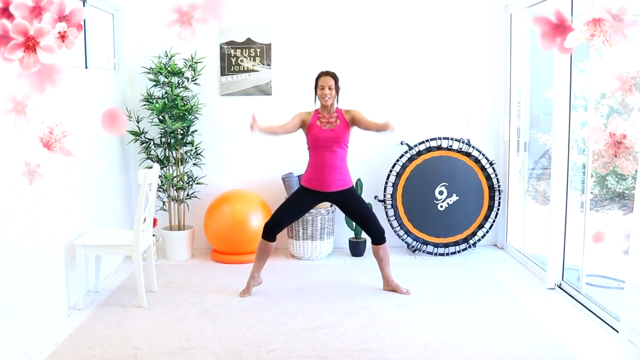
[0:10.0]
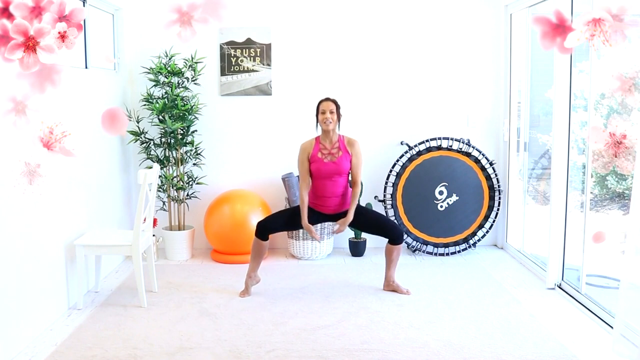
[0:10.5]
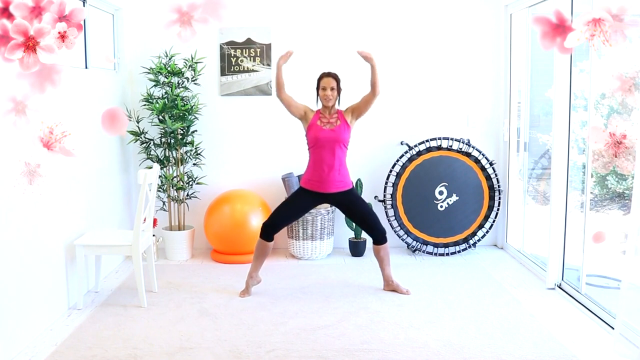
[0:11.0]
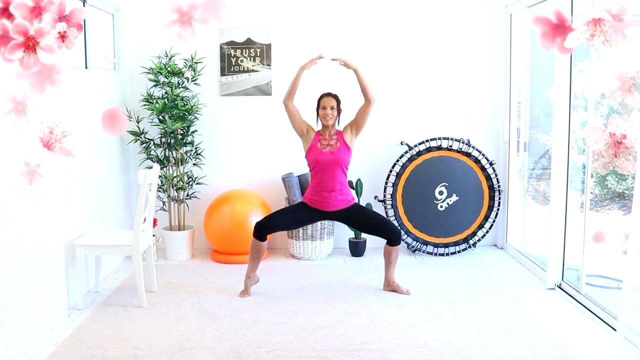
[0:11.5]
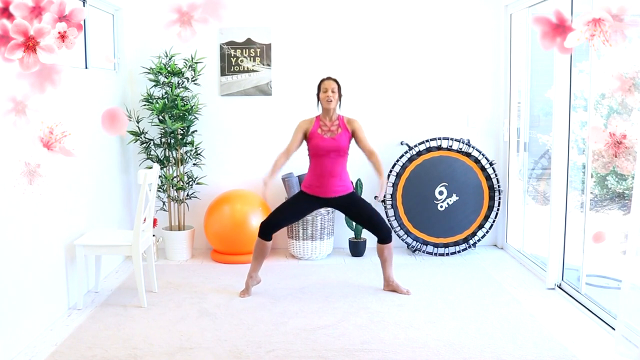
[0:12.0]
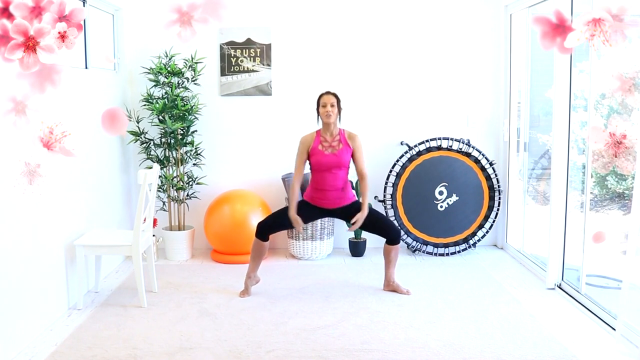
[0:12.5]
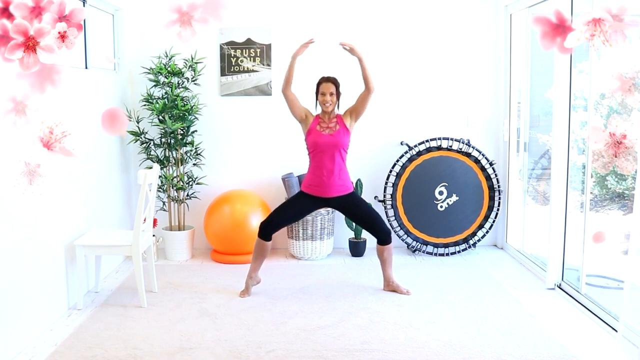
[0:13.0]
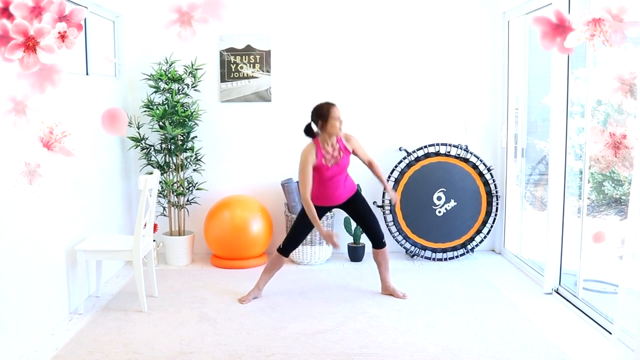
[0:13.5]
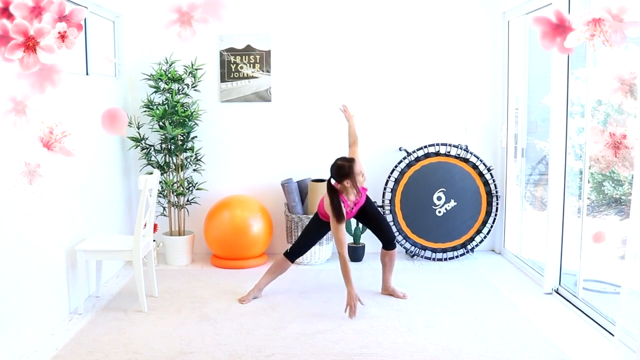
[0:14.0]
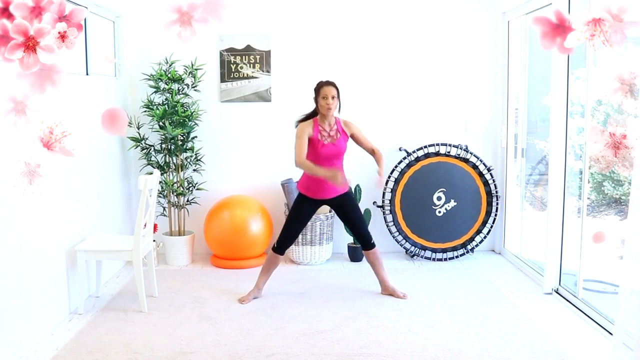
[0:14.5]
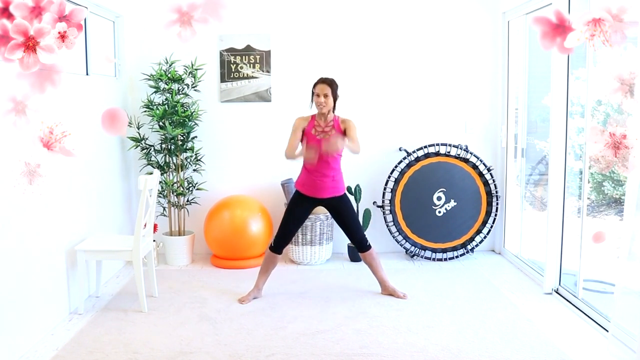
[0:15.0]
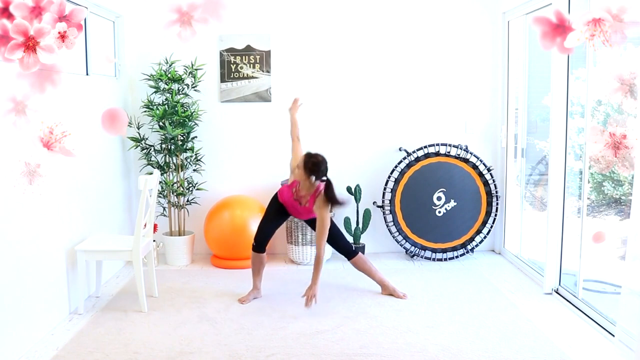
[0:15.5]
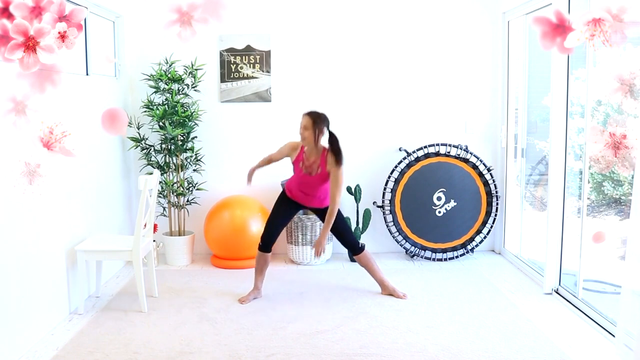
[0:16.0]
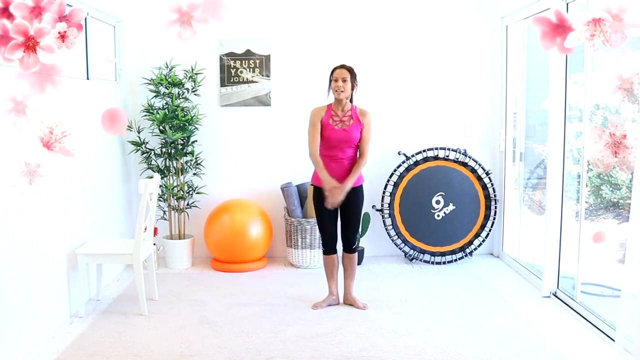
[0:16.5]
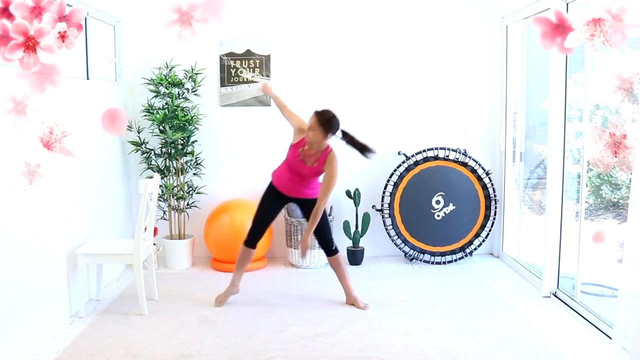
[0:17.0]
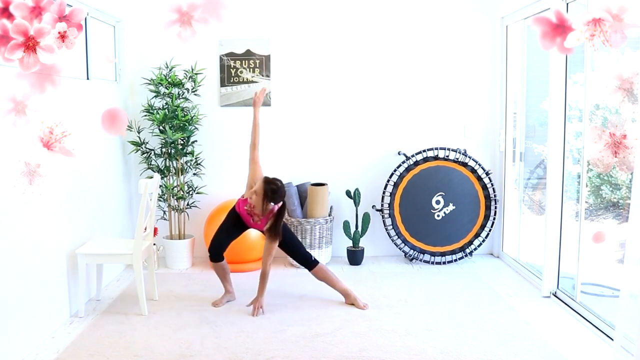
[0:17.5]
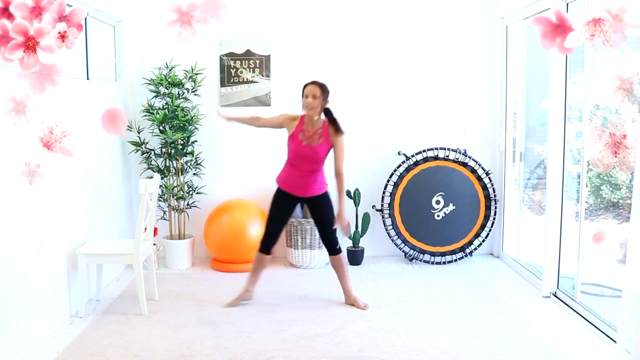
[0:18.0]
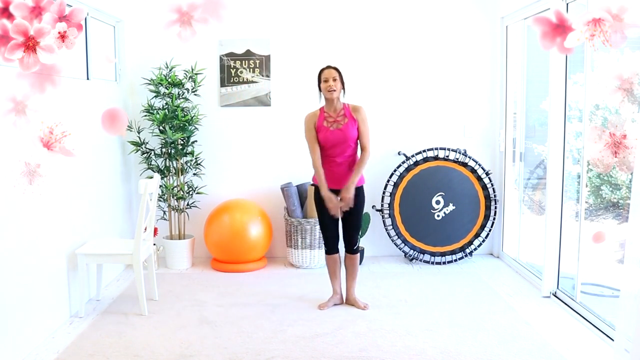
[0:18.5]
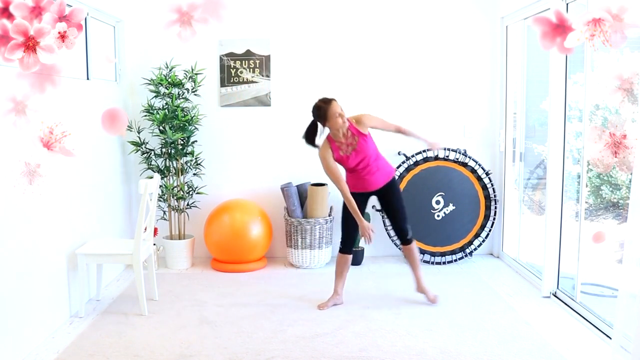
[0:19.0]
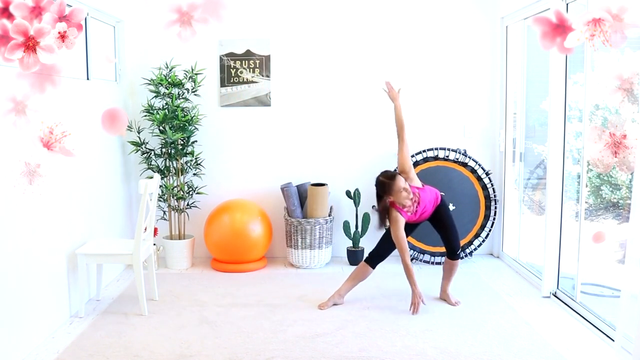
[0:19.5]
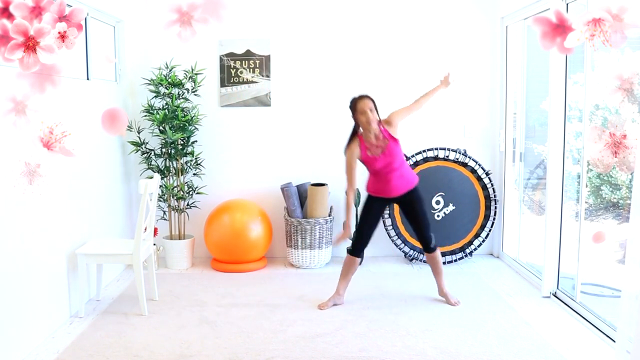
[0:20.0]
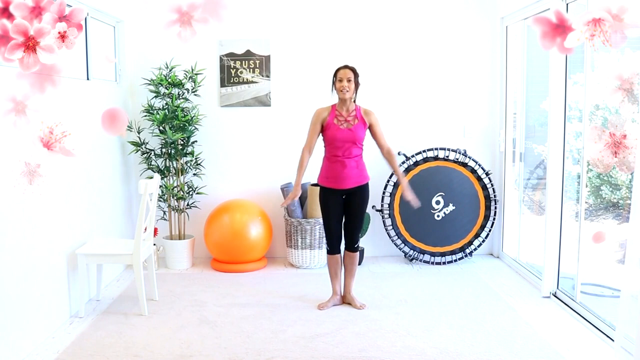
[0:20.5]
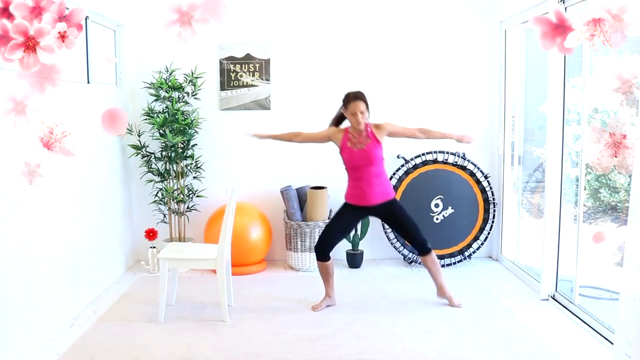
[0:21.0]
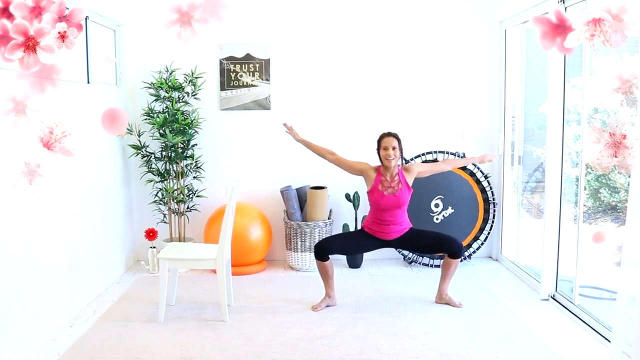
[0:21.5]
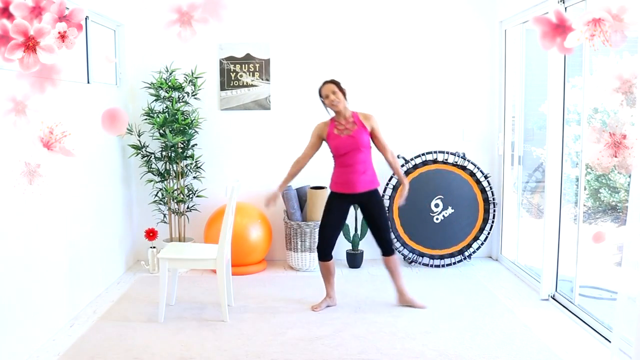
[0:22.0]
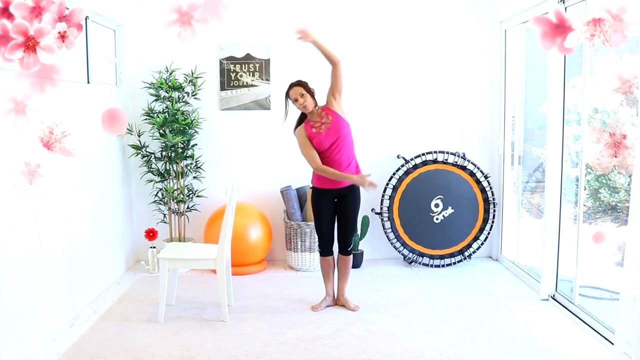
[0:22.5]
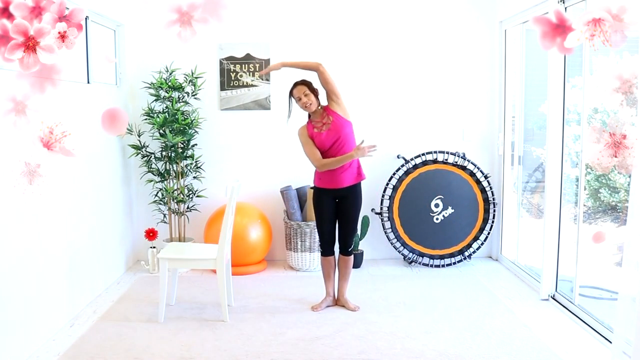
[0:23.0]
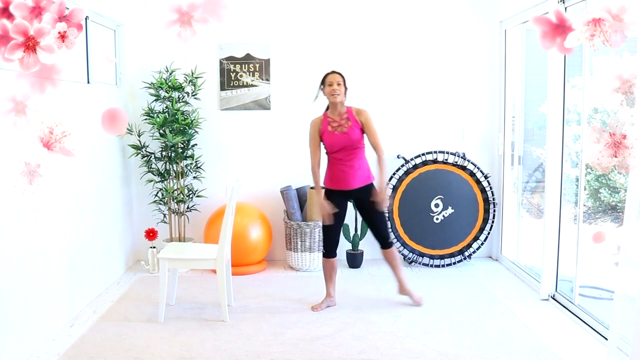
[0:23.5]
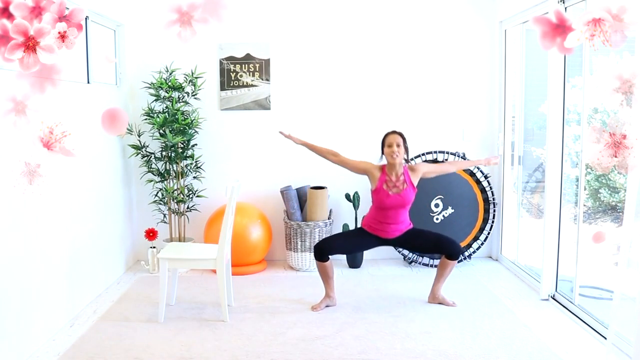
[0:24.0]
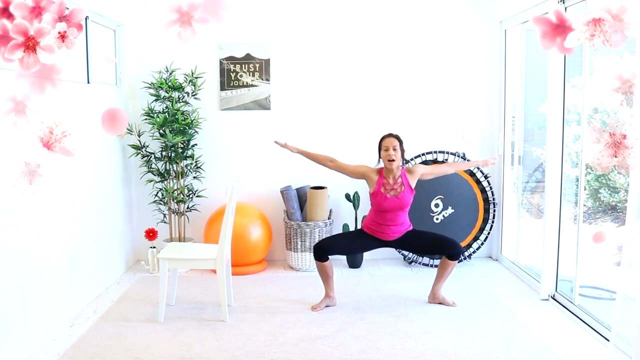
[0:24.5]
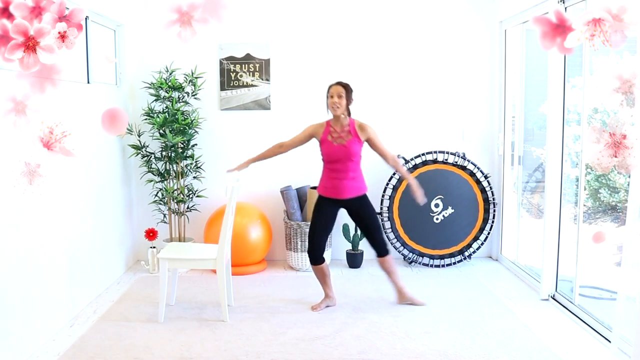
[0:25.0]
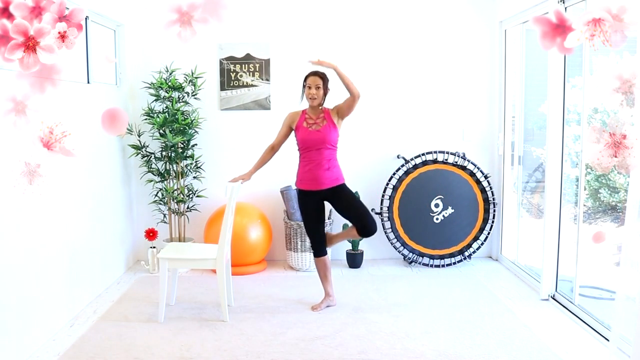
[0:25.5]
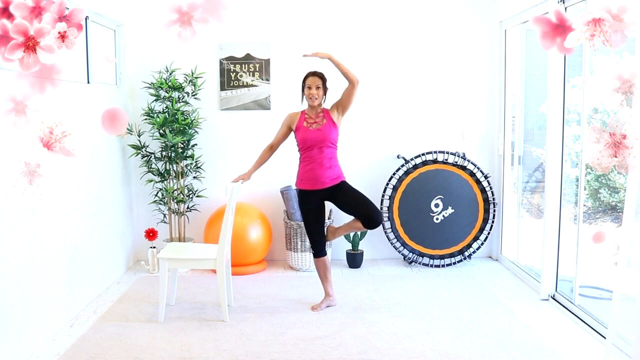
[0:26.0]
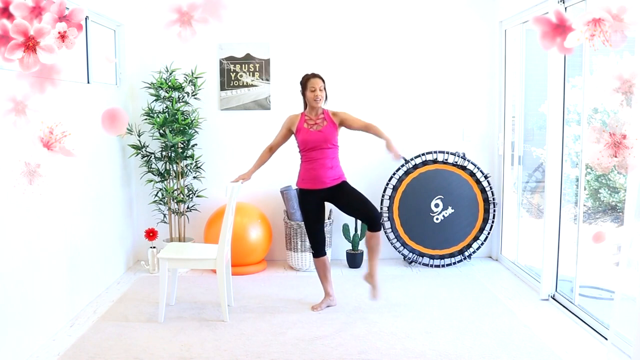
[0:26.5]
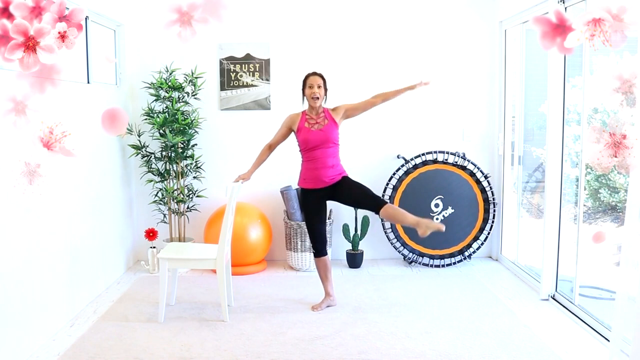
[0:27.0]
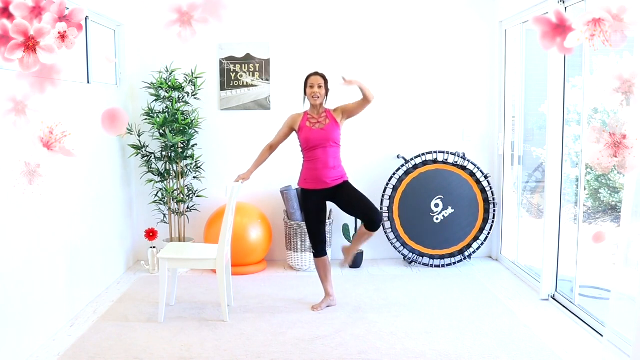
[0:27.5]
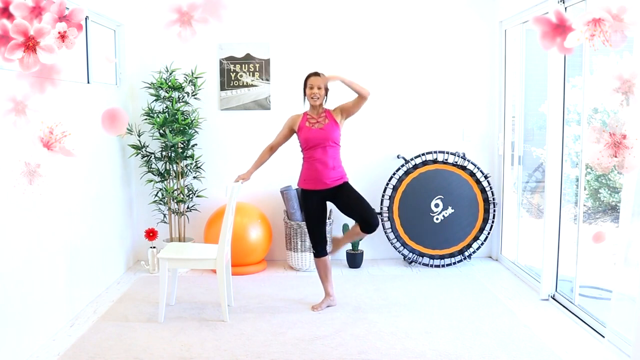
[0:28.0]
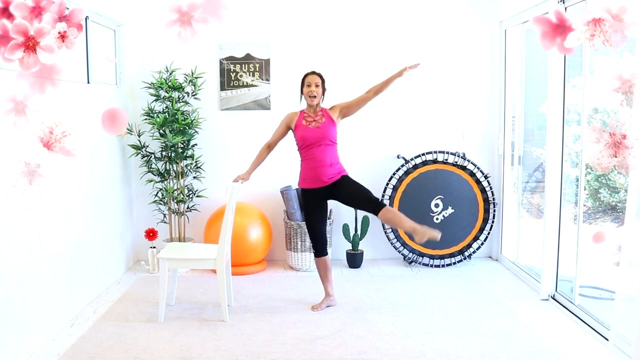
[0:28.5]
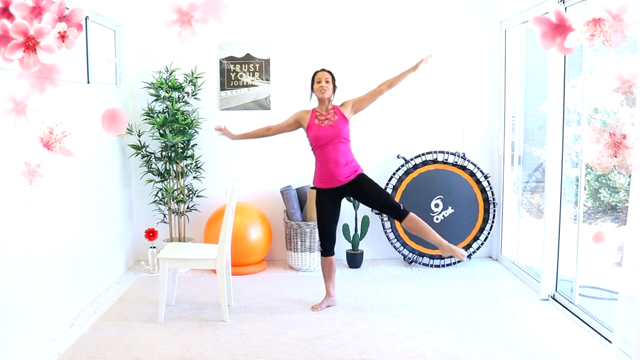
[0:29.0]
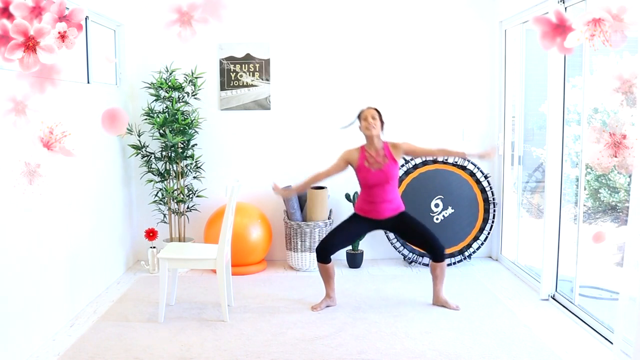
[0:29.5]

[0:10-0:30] The woman in the pink top and black sweatpants continues exercising, with the trampoline in the back. A clear patio door is on the right of the screen. A plant is on the left, and an orange rubber ball, one of the large exercise balls, is slightly to her right. There is a gray and purple basket with some items inside it. A sign in the back reads "trust your" followed by a word that is possibly "job". Pink flowers appear, kind of like animations, as she does aerobics: squatting, moving her arms up, doing bent-over squats with her arms going to the floor, and swinging her arms outward left to right and right to left. She uses a white chair for balance. It is unclear whether she is really there; the scene may be CGI or AI, and it kind of looks realistic and kind of doesn't. Another plant, which almost looks like a cactus, is on the floor behind her.